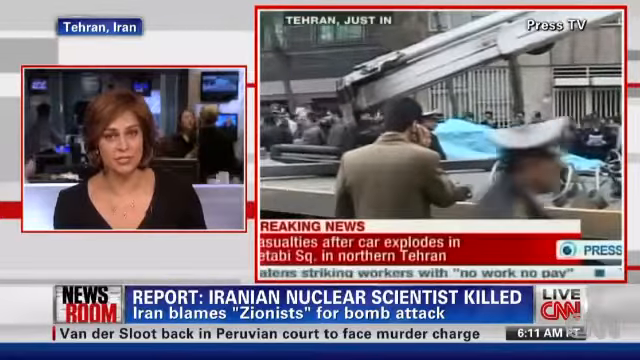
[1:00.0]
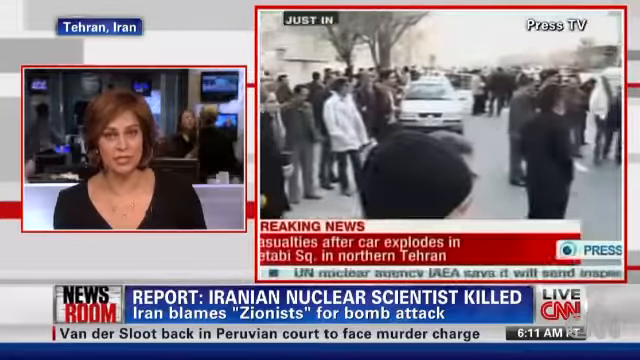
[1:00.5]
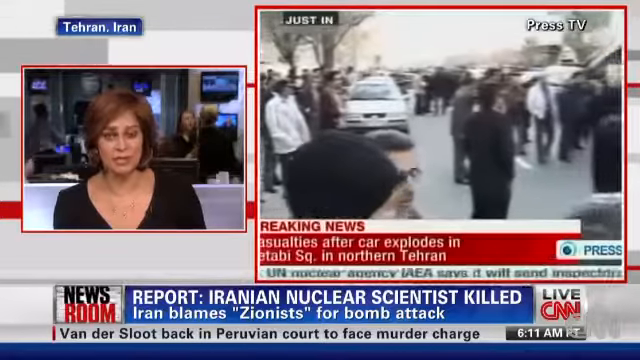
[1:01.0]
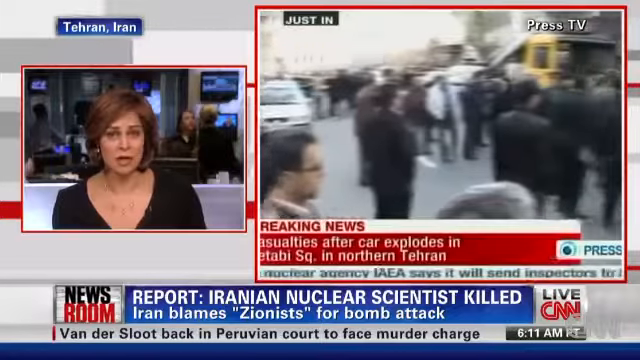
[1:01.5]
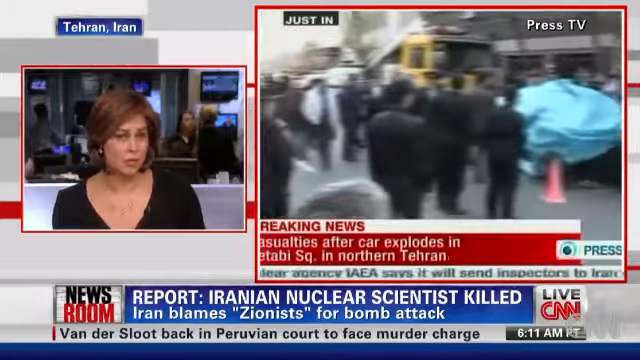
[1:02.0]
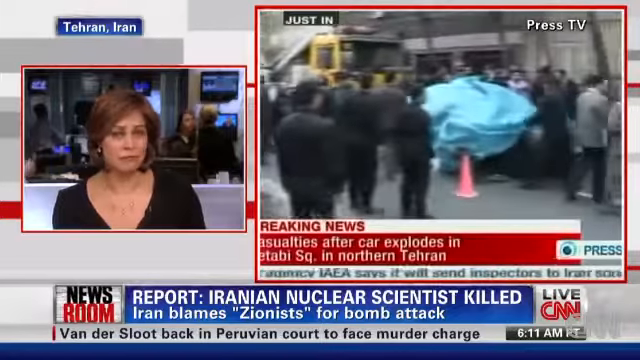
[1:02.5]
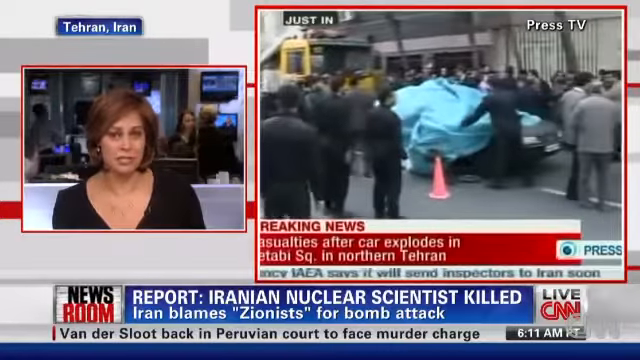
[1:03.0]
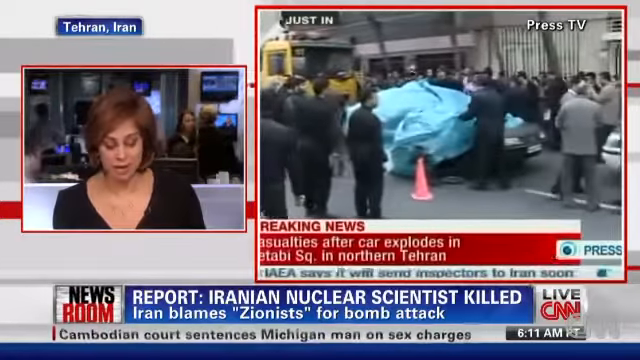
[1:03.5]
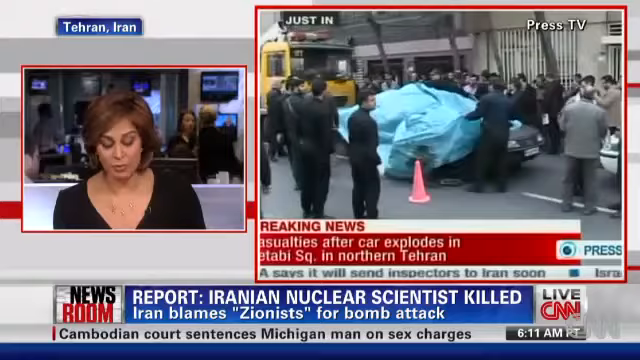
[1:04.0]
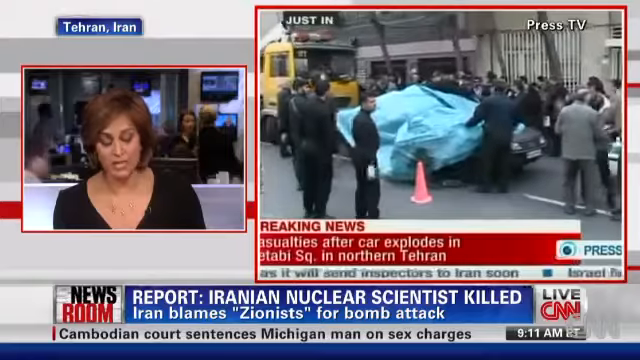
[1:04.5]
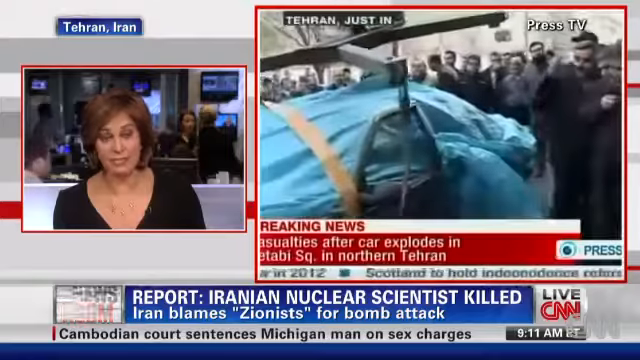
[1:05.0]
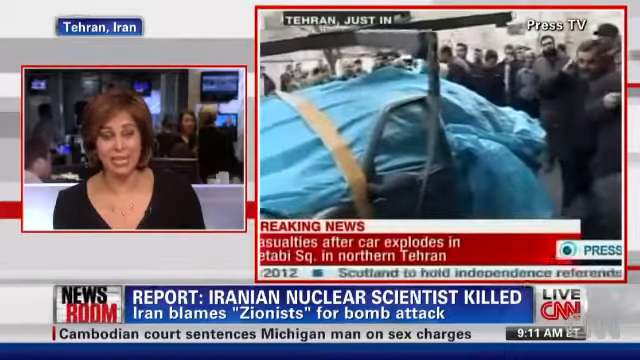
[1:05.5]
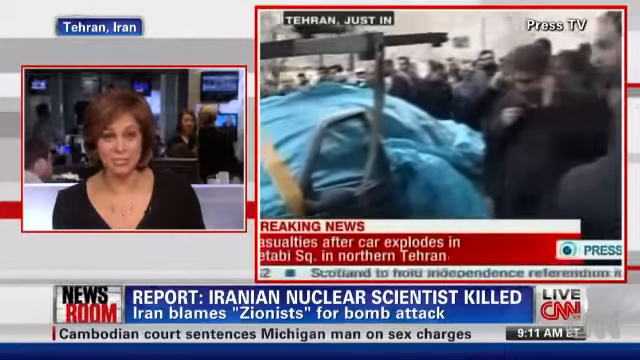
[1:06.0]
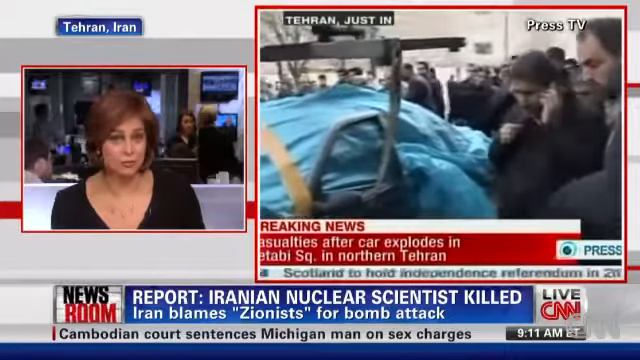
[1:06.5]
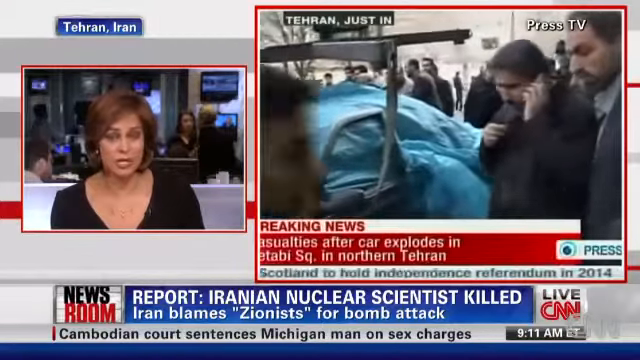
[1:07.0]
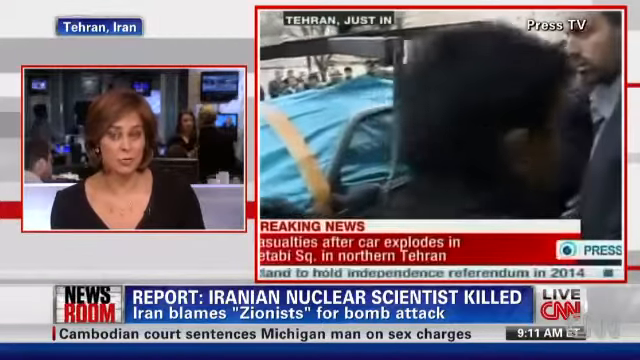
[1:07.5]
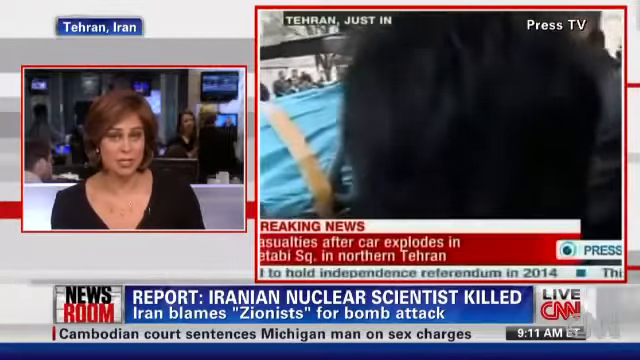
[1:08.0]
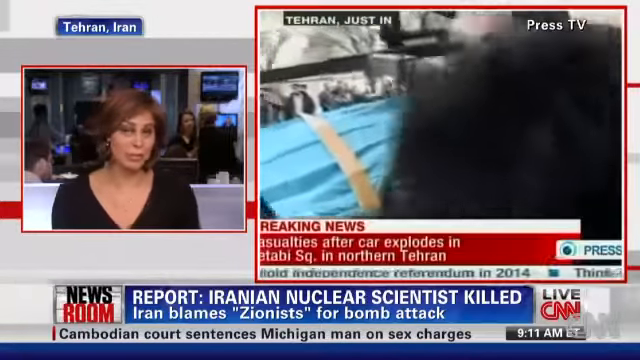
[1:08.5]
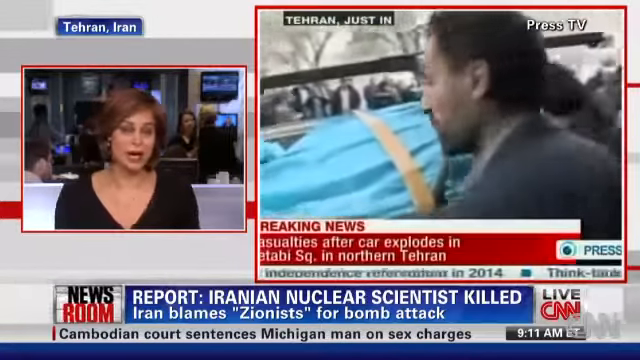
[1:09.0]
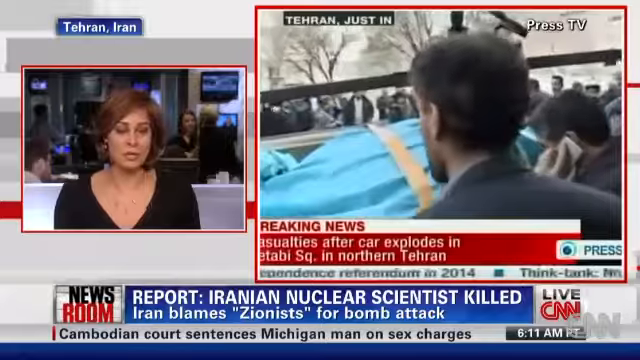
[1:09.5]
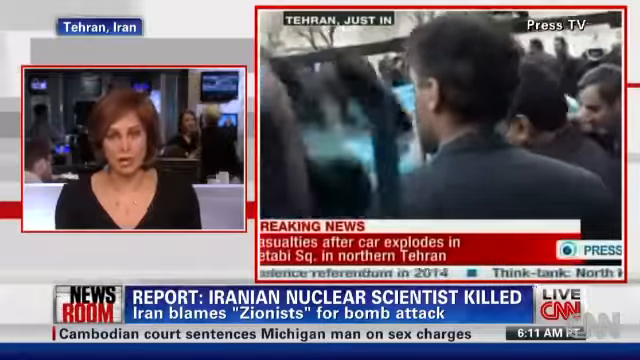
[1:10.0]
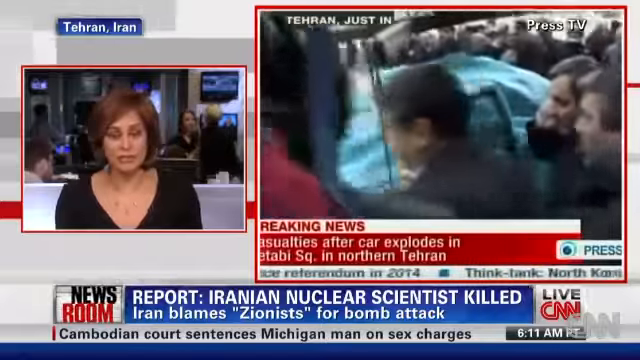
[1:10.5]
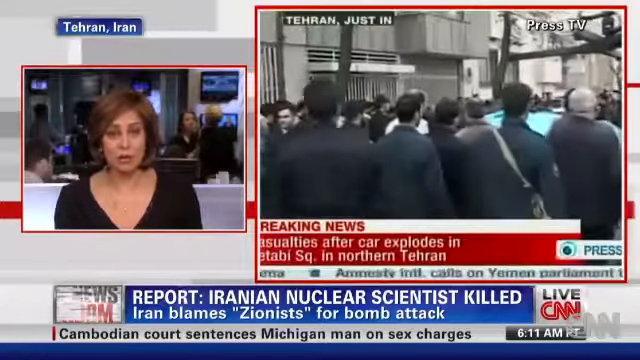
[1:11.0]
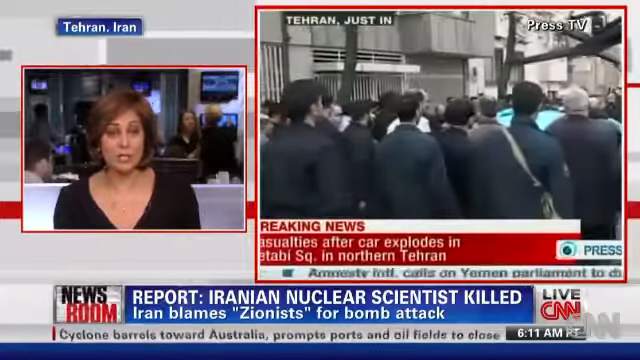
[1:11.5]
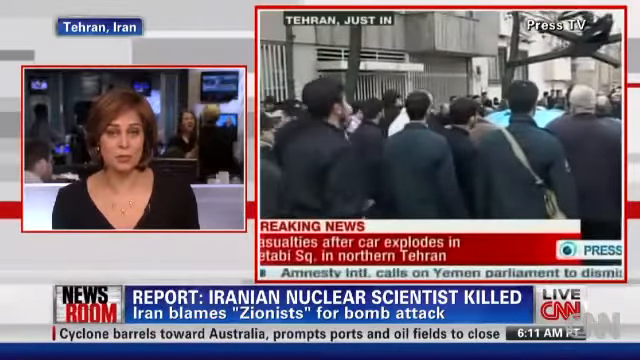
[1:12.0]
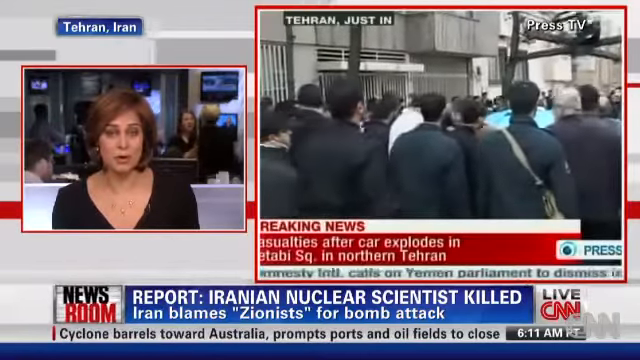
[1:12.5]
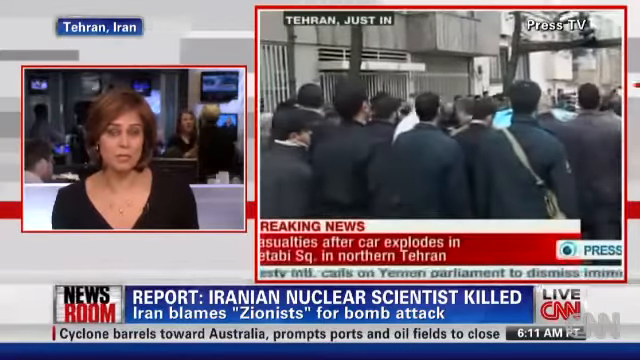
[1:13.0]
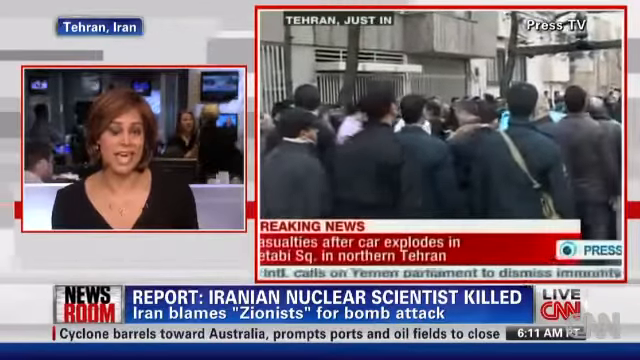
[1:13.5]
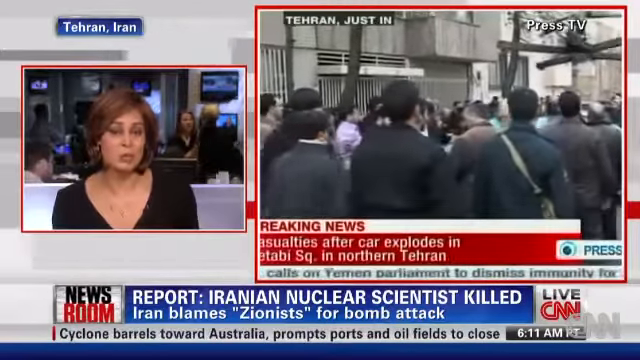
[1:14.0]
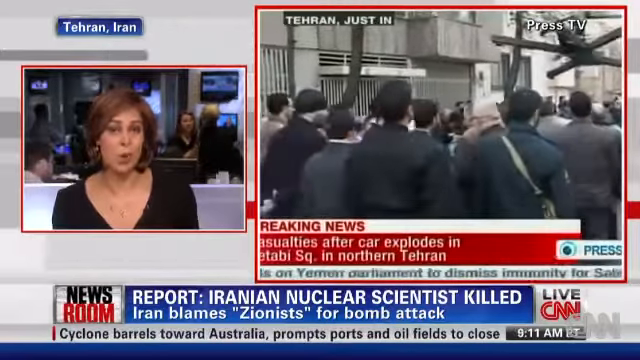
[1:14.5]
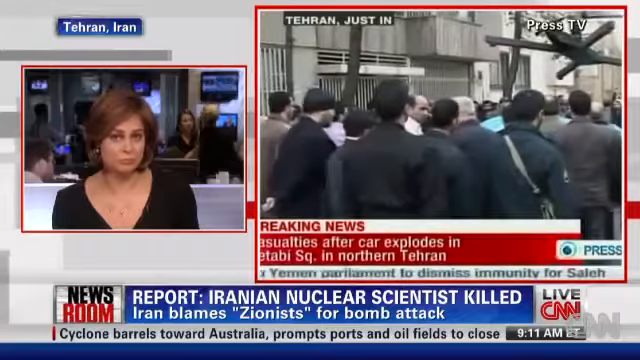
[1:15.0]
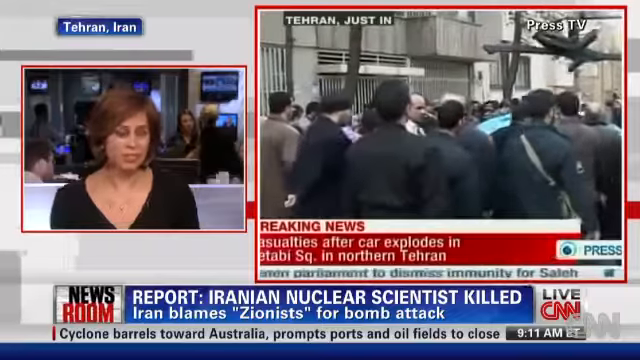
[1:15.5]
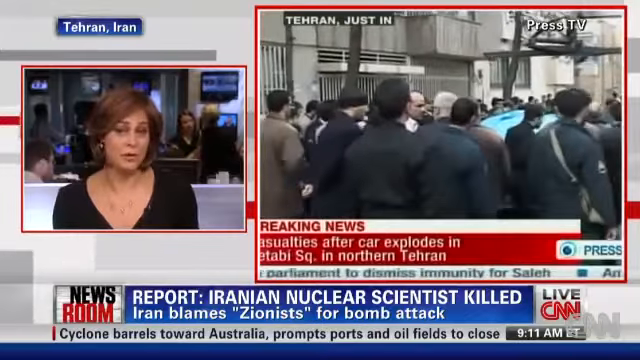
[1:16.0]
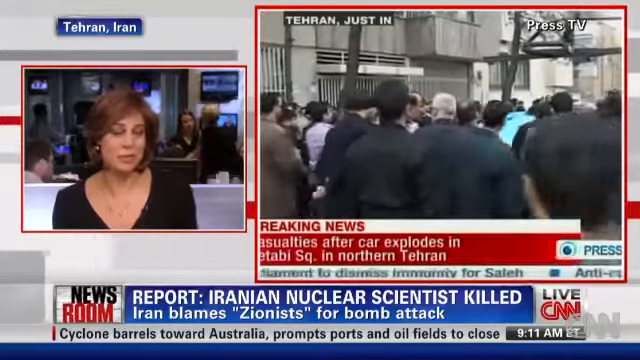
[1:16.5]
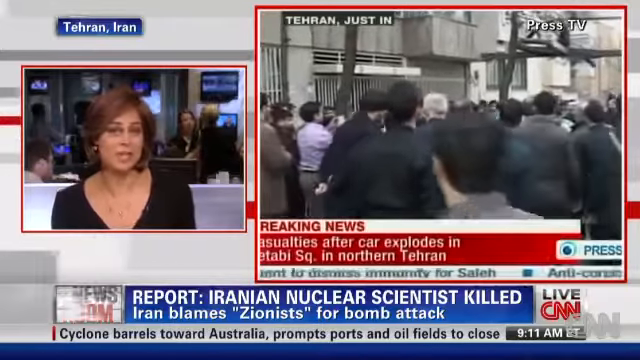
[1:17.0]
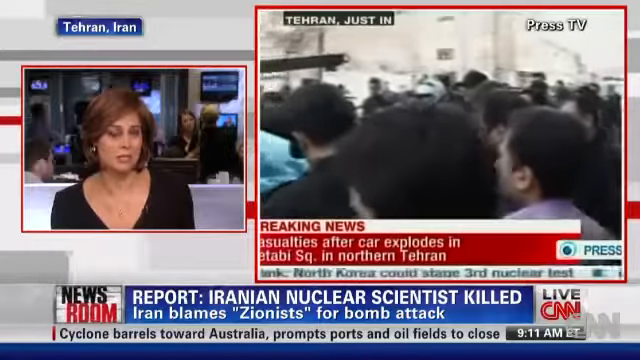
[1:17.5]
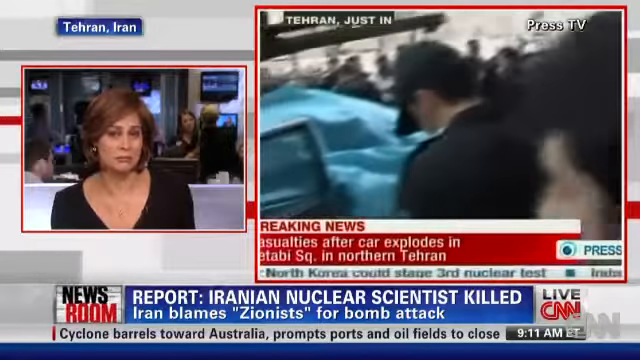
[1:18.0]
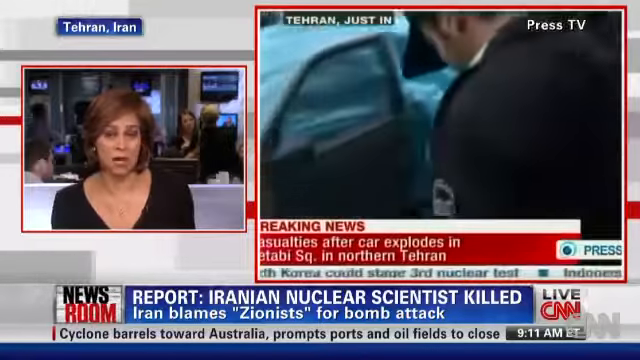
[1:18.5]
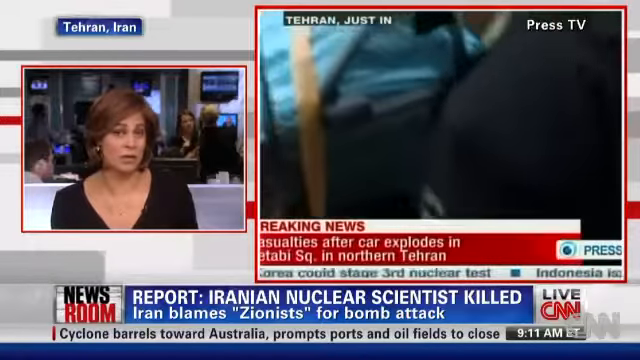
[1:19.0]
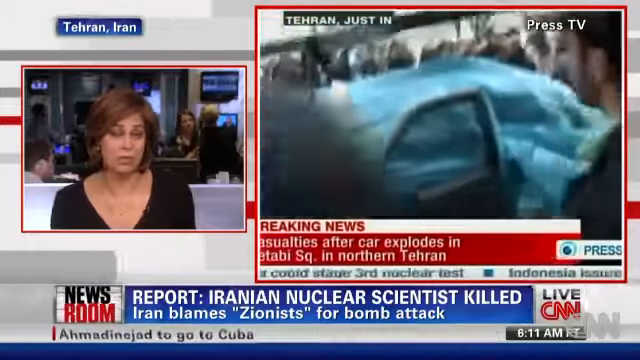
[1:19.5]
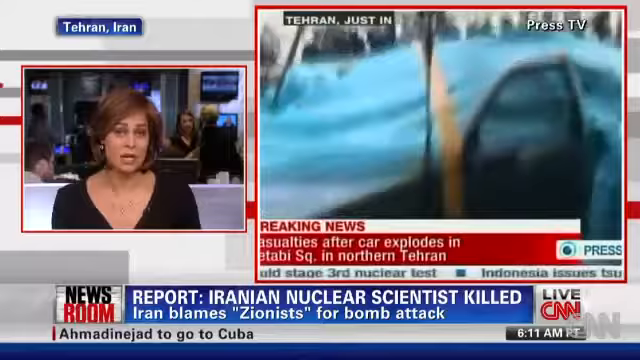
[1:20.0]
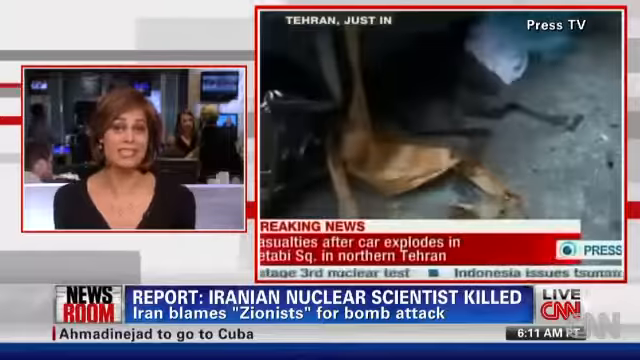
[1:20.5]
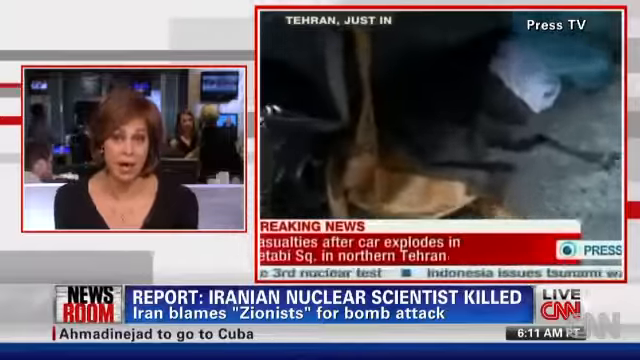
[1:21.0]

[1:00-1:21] Many people are gathered outside a building, most of them wearing black clothes. Cones are placed next to a car that is covered in something blue, hiding it from view, and there seems to be a tow truck next to it to tow the car. The event appears to be a car explosion in northern Tehran, Iran, in the middle of the city. A man is seen from the back wearing a blazer and using his phone, apparently talking to someone. Forensic people and police officers are around the scene, along with journalists reporting on it.